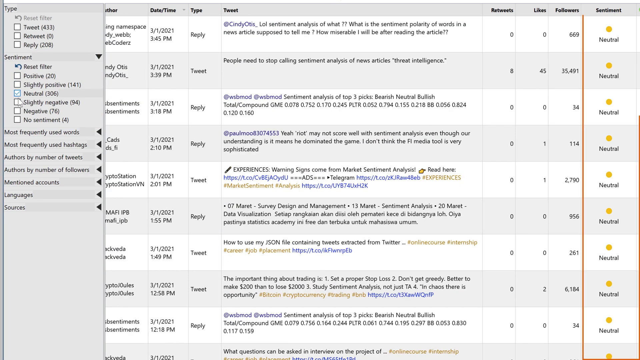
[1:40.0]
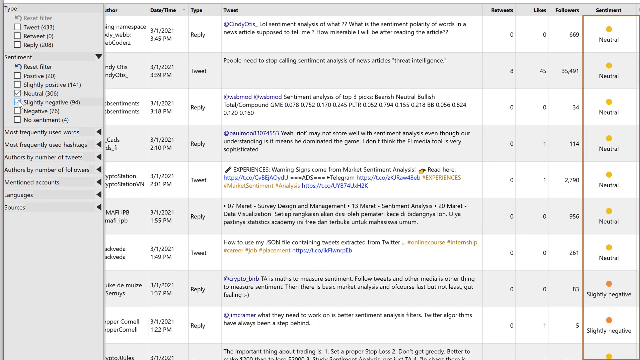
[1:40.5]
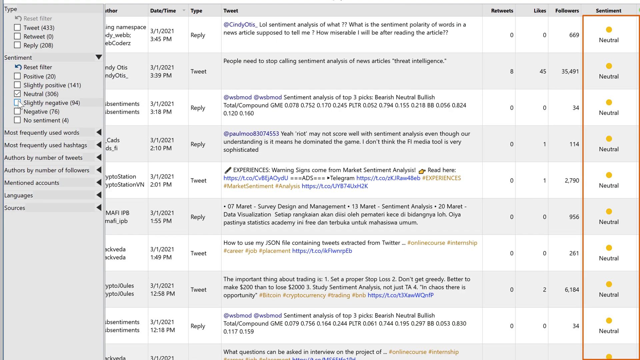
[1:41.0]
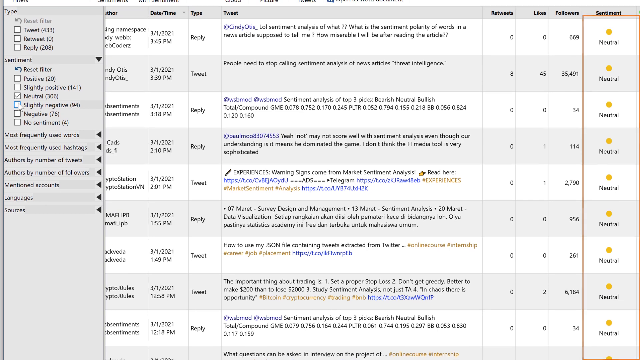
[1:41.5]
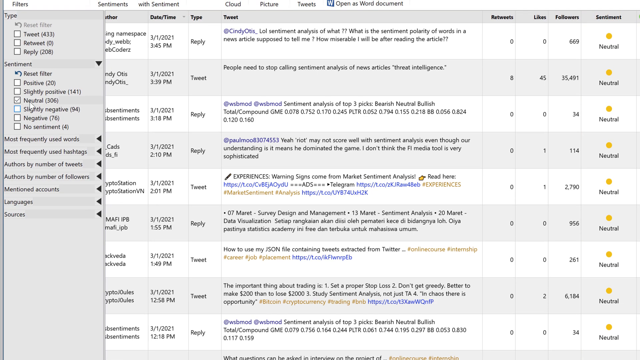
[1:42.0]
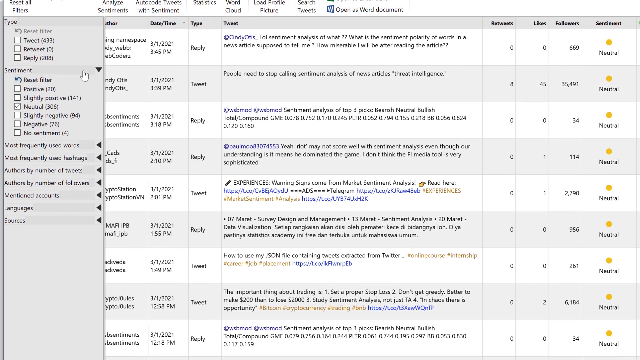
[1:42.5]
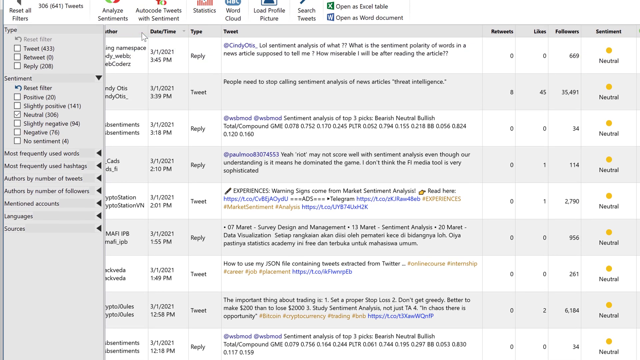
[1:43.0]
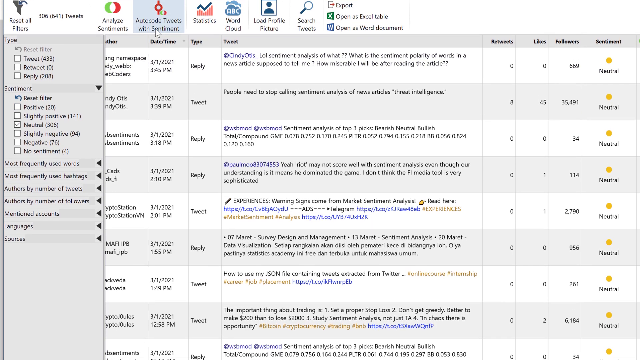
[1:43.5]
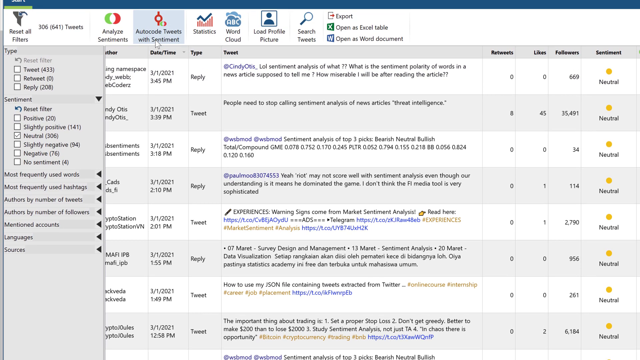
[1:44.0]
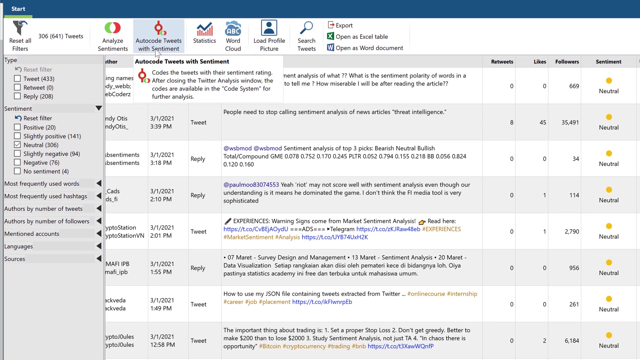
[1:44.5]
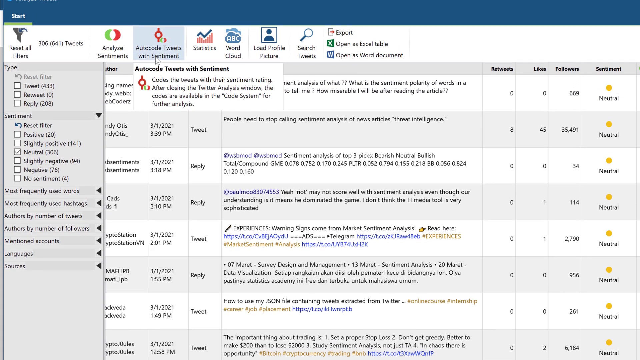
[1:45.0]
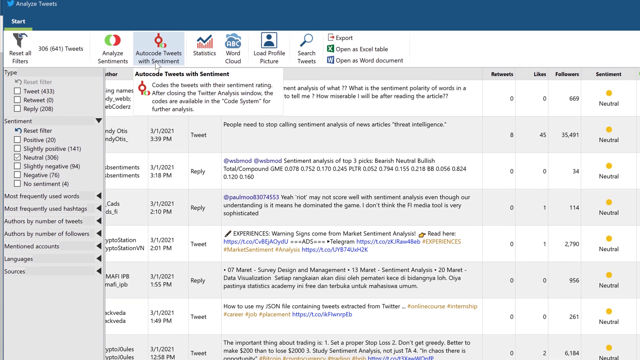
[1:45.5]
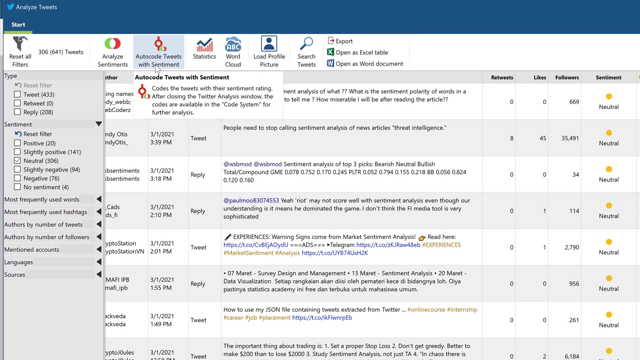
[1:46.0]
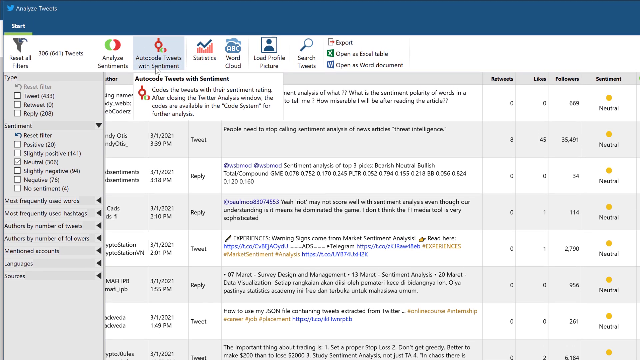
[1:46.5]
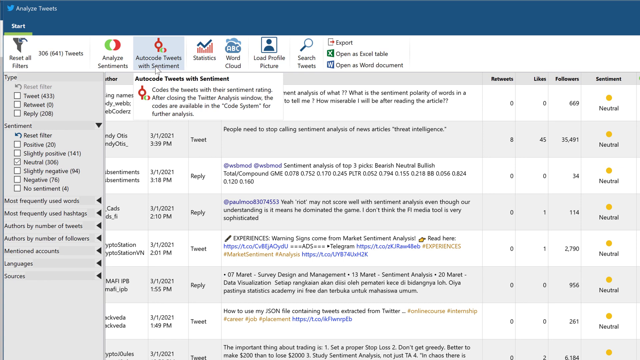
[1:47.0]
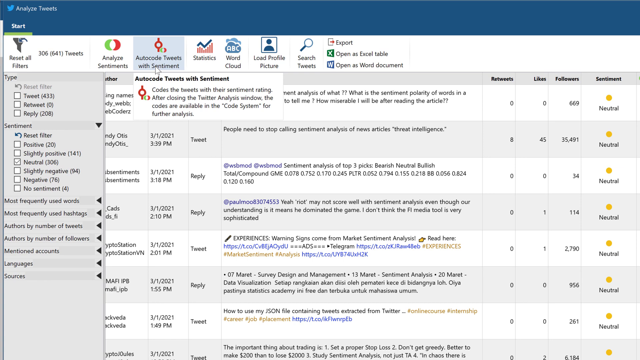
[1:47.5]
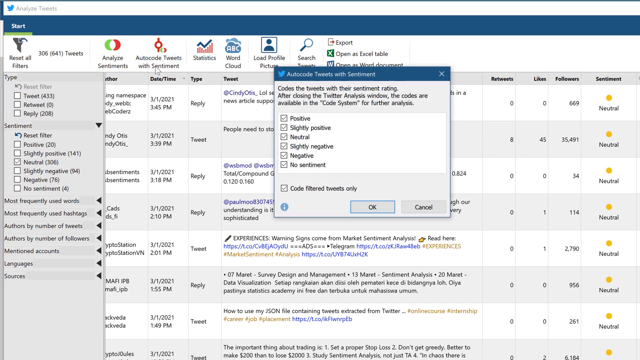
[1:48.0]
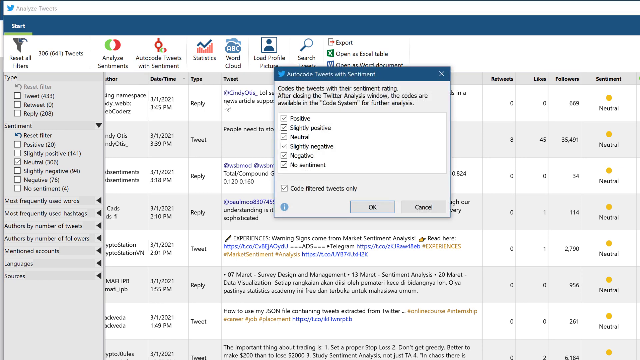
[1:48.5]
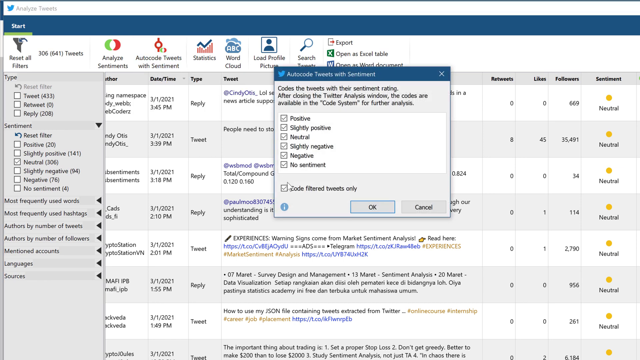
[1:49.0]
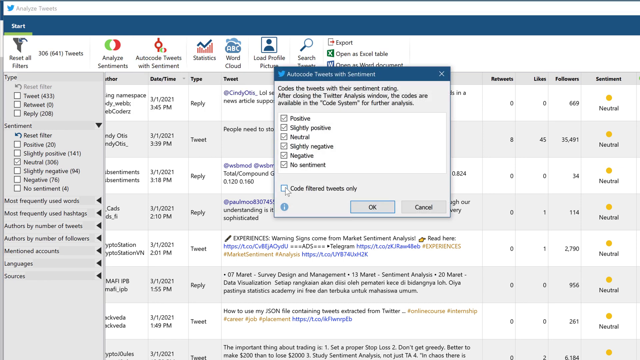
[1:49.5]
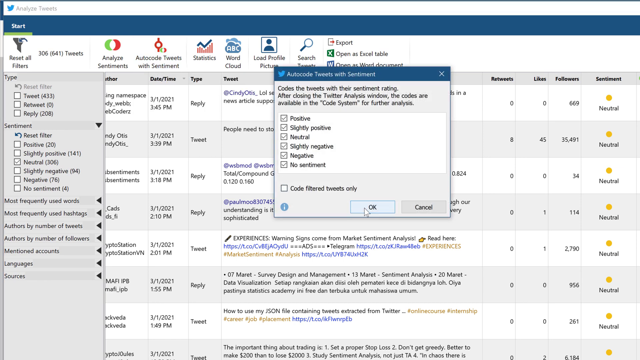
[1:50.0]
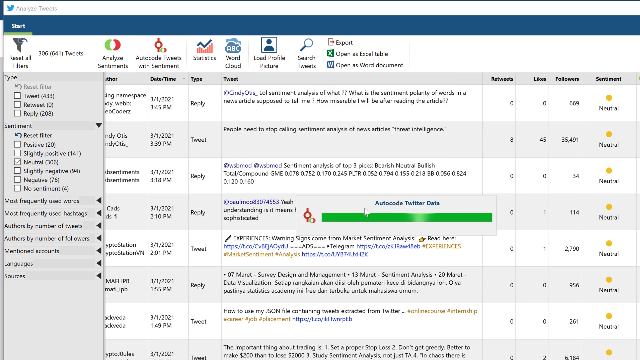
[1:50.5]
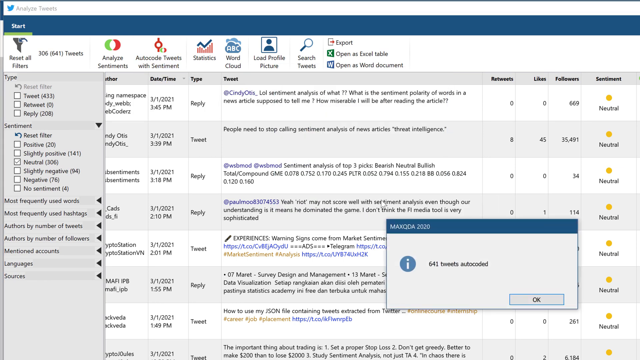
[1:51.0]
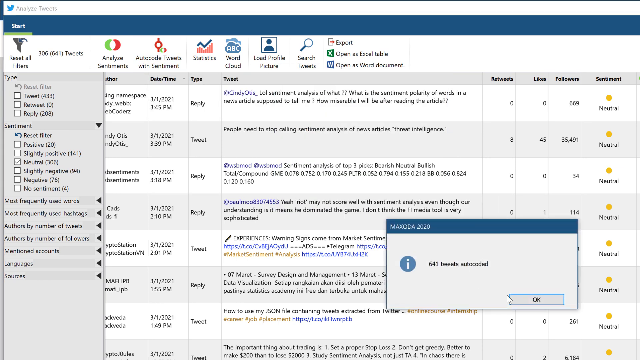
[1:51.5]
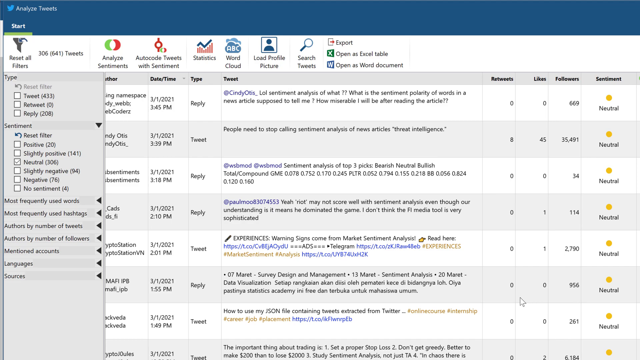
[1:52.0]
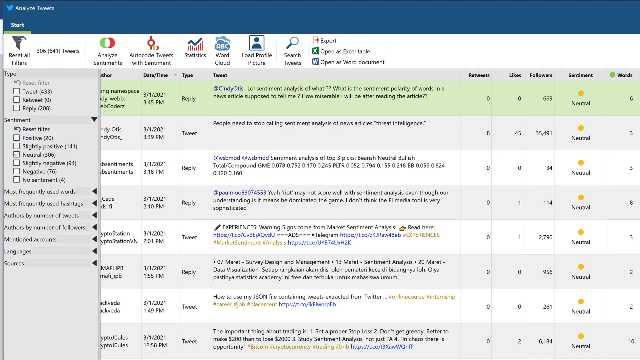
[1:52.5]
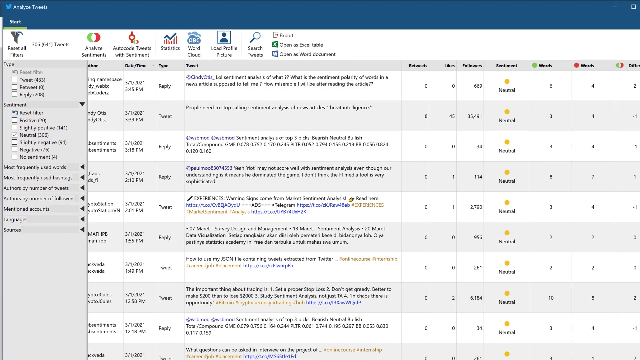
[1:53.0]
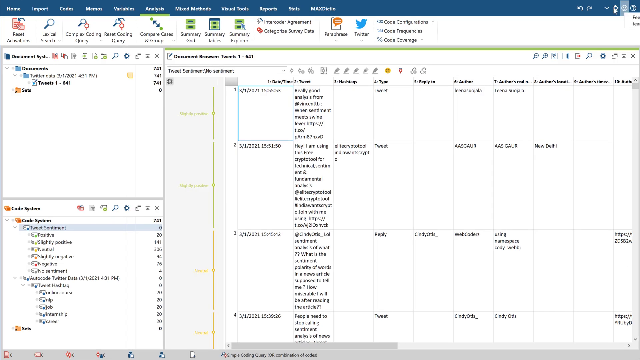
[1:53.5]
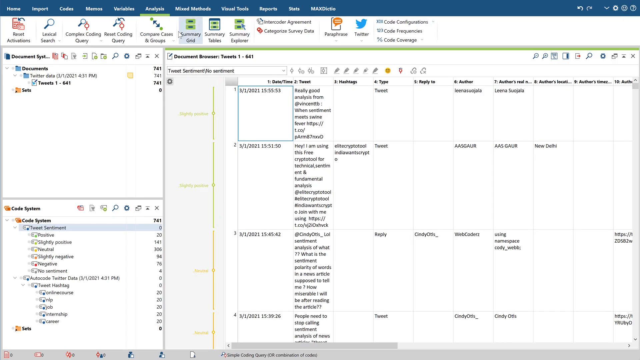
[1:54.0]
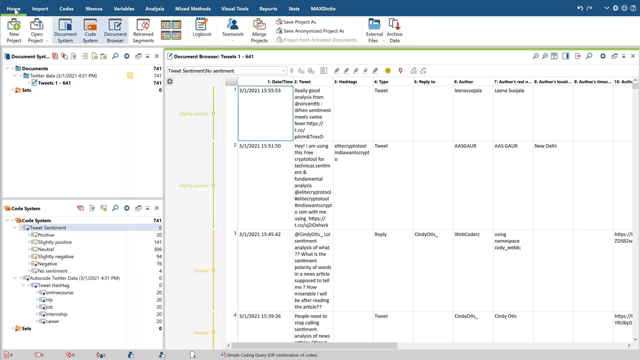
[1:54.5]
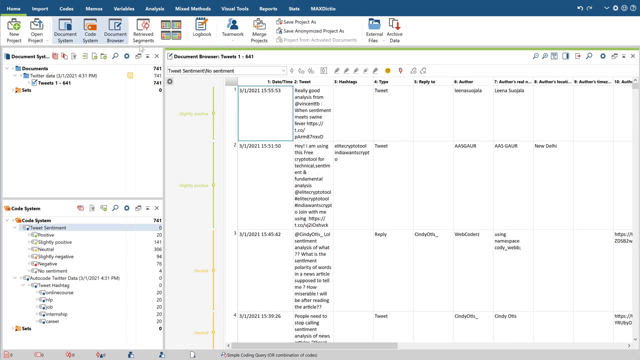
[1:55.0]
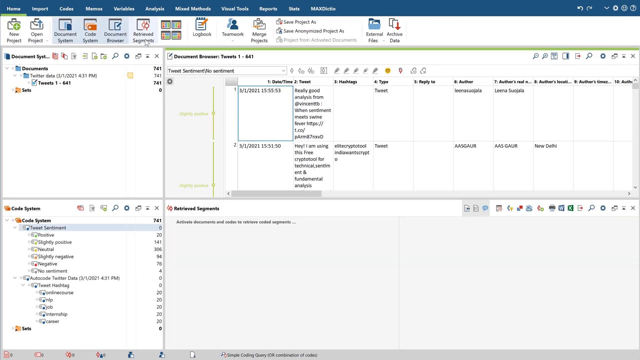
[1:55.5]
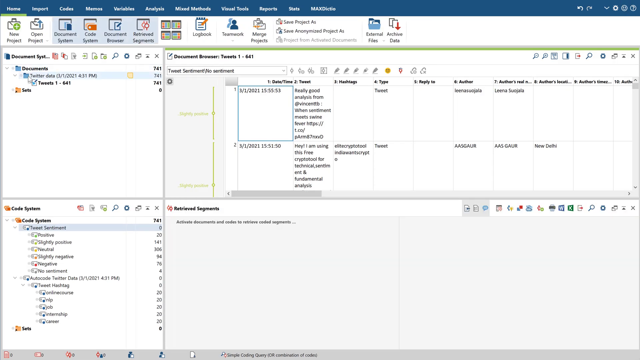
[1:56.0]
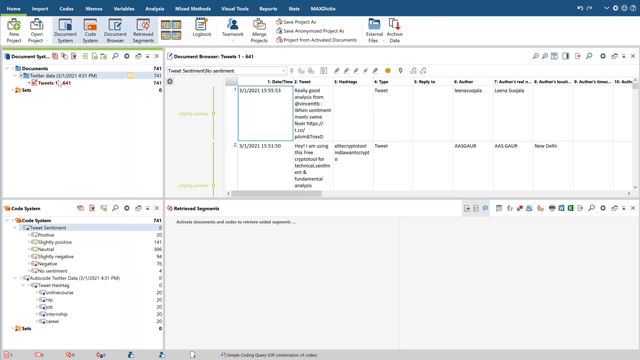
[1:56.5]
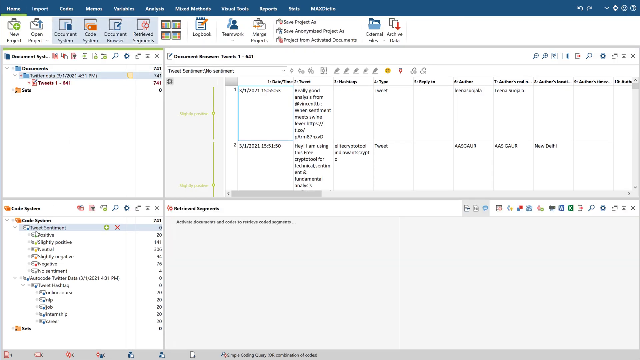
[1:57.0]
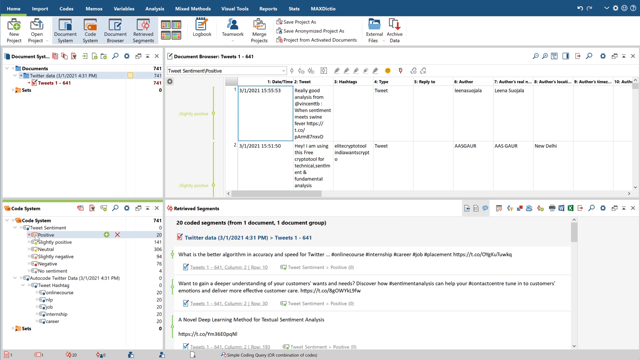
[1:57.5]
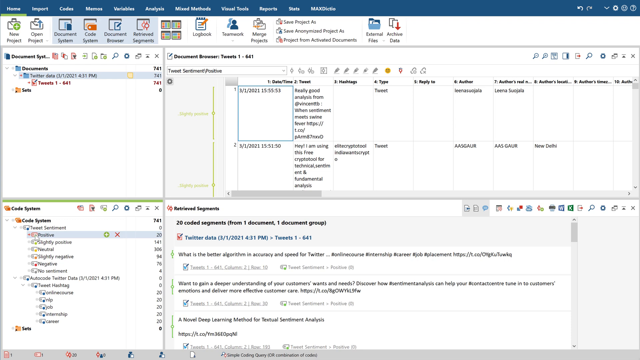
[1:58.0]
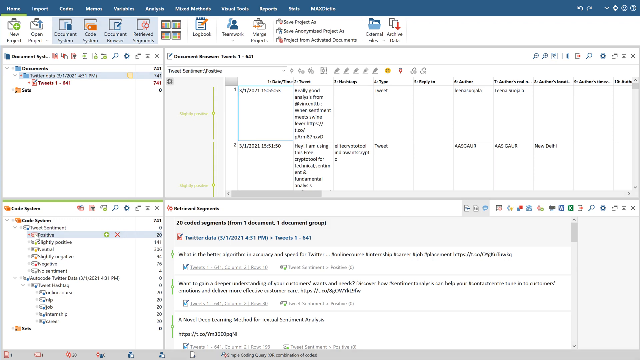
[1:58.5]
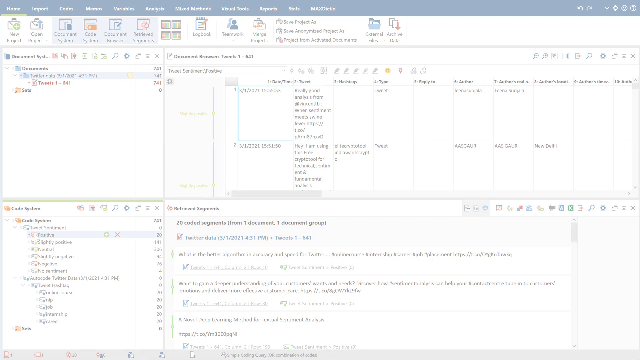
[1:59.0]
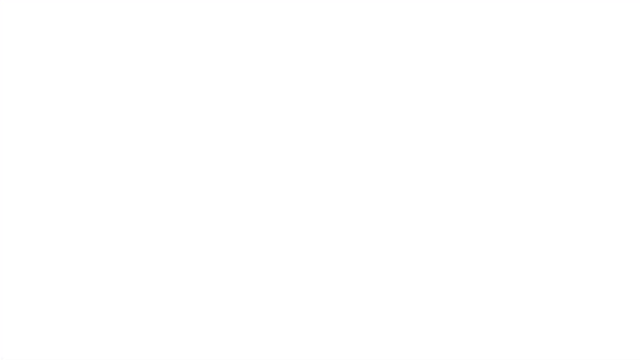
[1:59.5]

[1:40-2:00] Pulled out to the full screen, the filtered view shows only neutral sentiment entries. The cursor goes back up to the top center and hovers over the logo with the text "Autocode tweets with sentiment" underneath, and a dropdown reads "codes the tweets with their sentiment rating. After closing the Twitter analysis window, the codes are available in the code system for further analysis." The cursor clicks and a pop-up appears reading "Autocode tweets with sentiment, codes the tweets with their sentiment rating. After closing the Twitter analysis window, the codes are available in the code system for further analysis," with all options already checked: positive, slightly positive, neutral, slightly negative, negative, and no sentiment, plus OK, cancel, and information buttons.